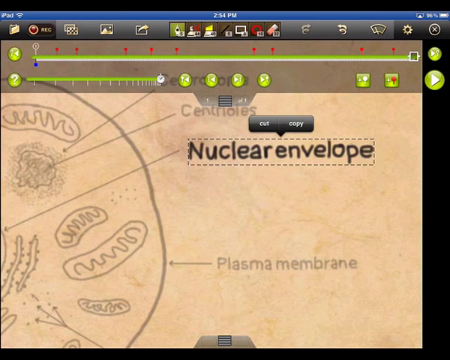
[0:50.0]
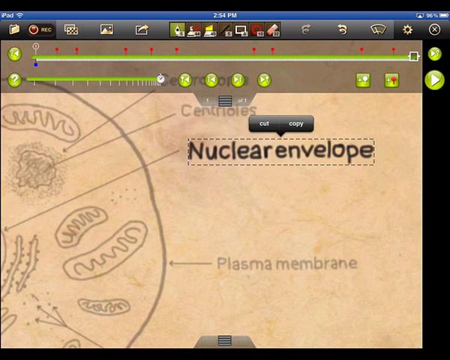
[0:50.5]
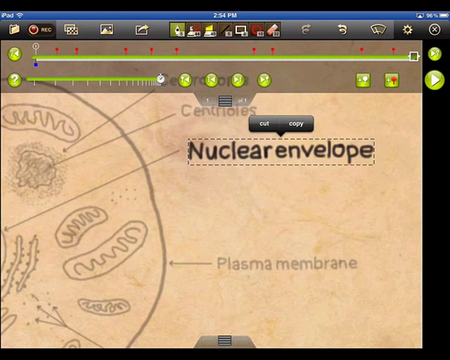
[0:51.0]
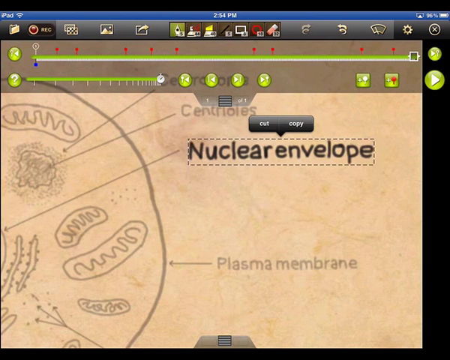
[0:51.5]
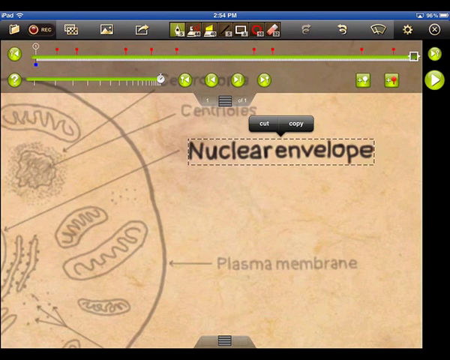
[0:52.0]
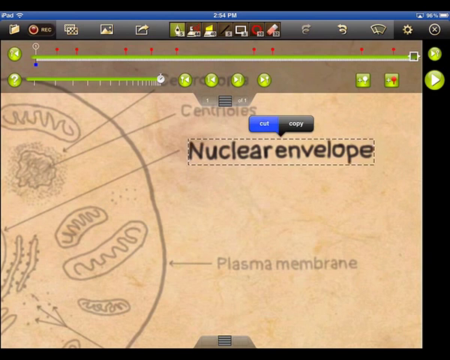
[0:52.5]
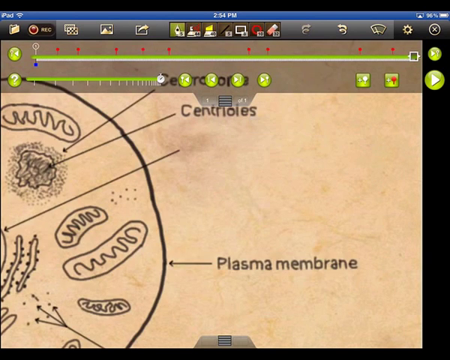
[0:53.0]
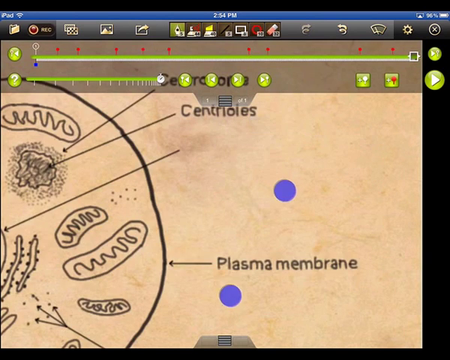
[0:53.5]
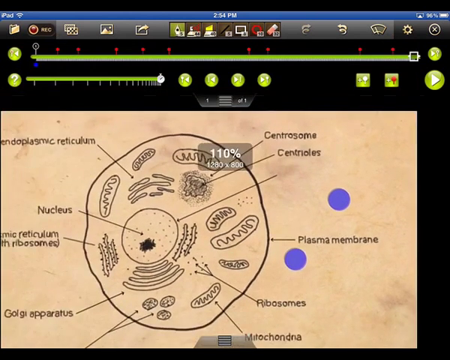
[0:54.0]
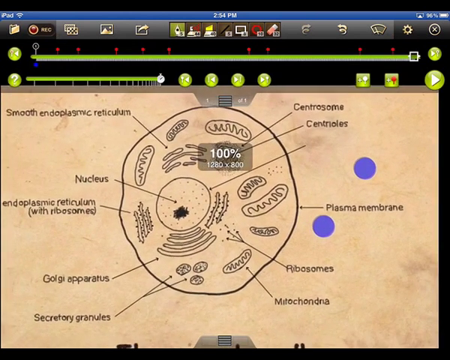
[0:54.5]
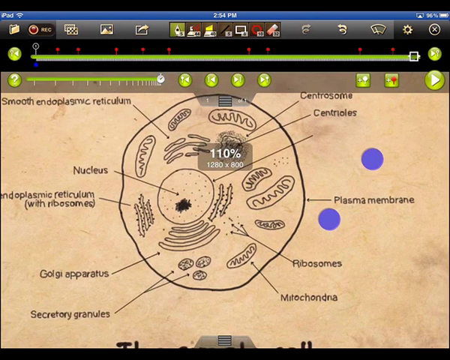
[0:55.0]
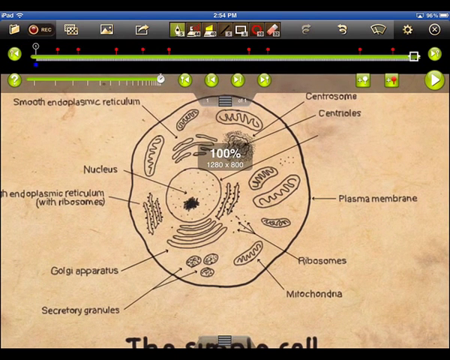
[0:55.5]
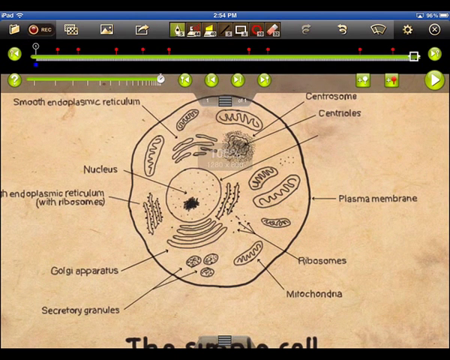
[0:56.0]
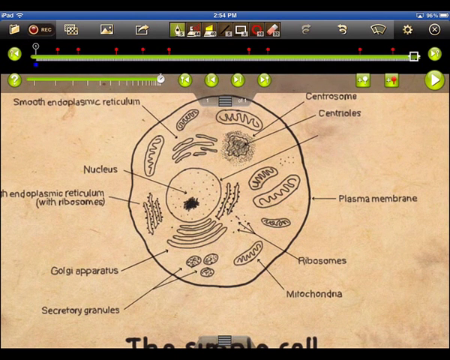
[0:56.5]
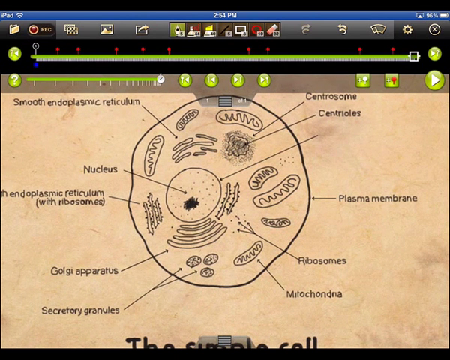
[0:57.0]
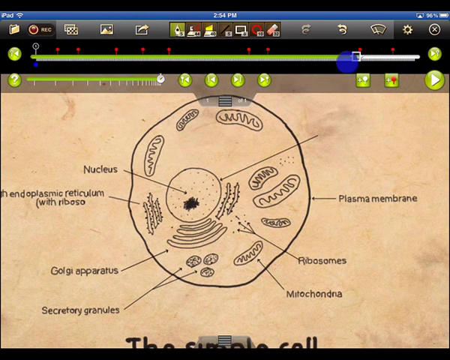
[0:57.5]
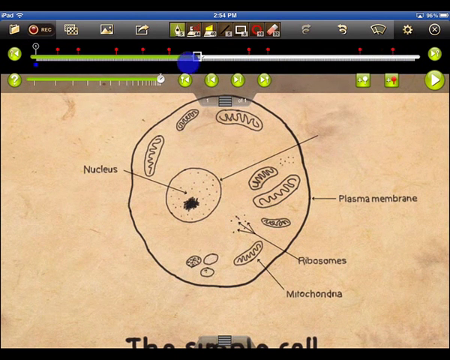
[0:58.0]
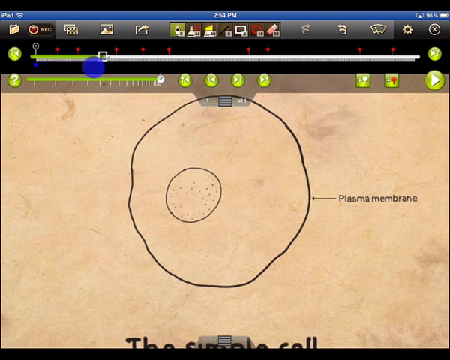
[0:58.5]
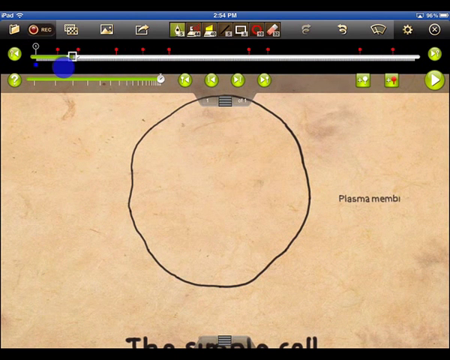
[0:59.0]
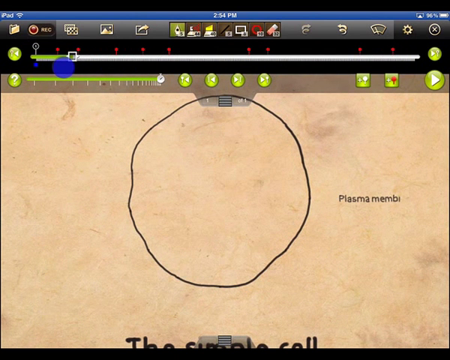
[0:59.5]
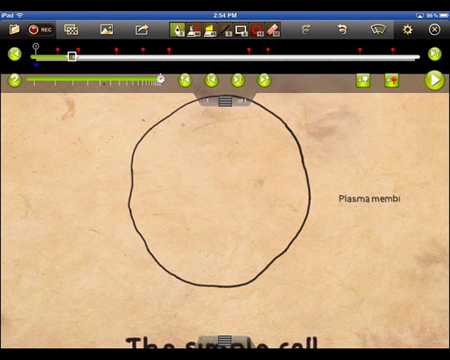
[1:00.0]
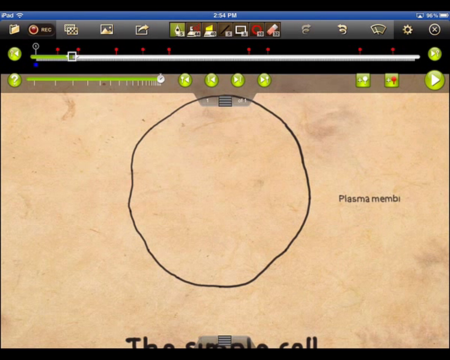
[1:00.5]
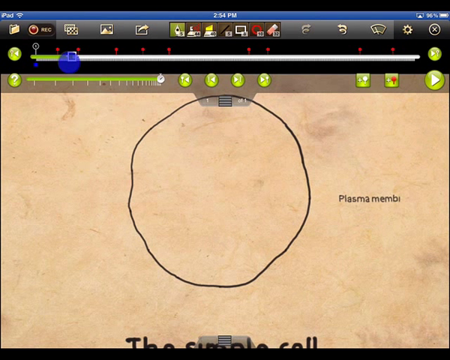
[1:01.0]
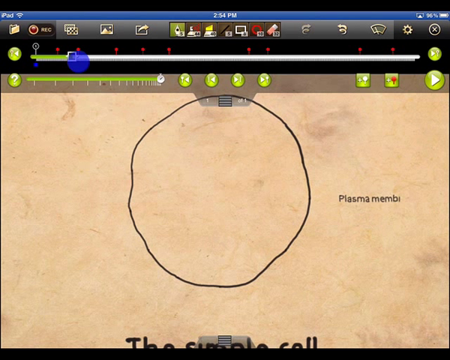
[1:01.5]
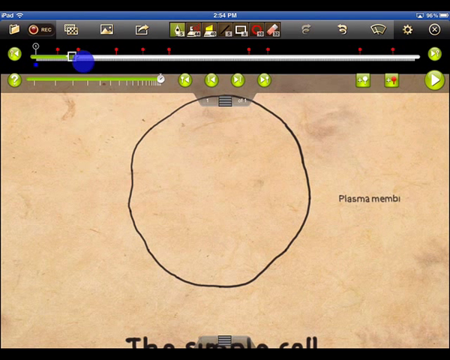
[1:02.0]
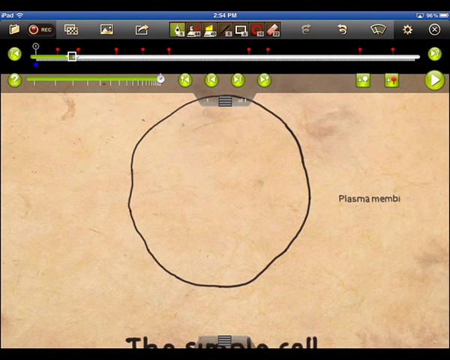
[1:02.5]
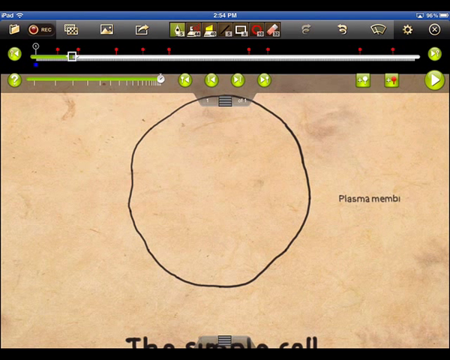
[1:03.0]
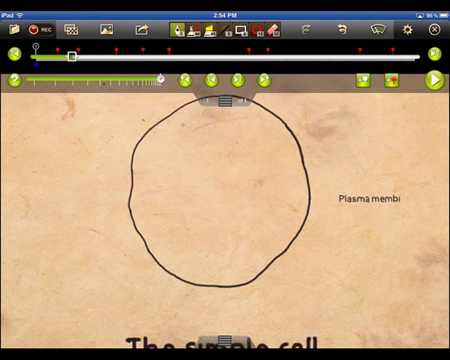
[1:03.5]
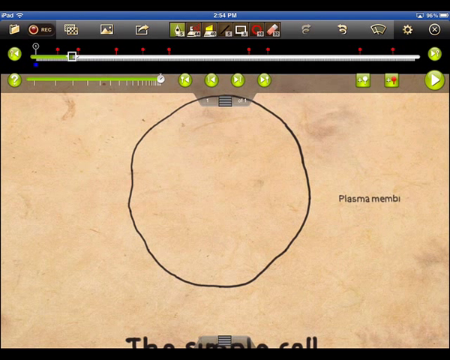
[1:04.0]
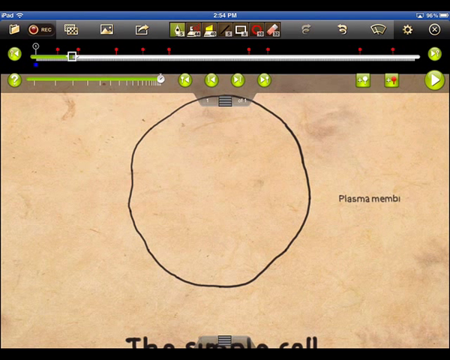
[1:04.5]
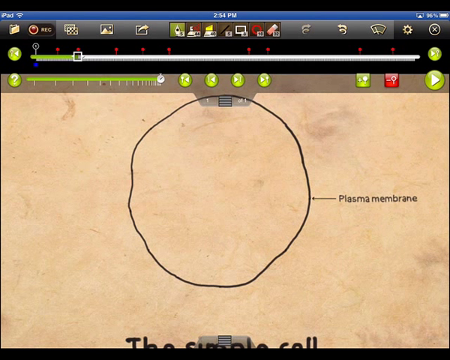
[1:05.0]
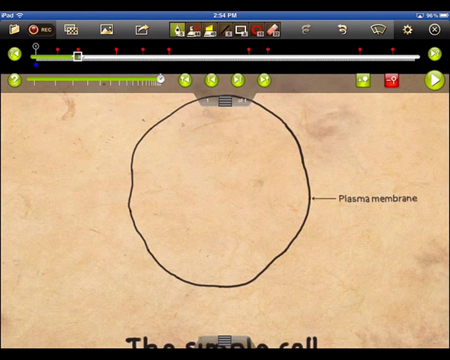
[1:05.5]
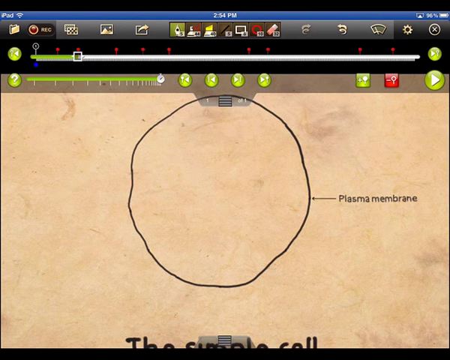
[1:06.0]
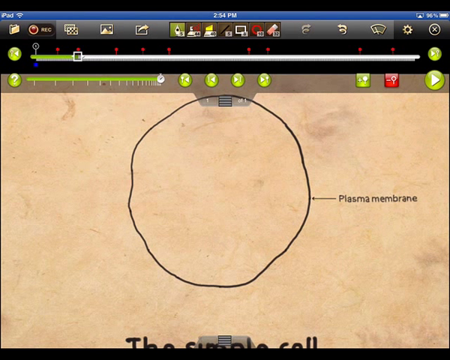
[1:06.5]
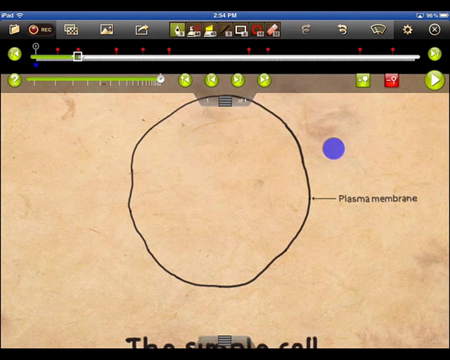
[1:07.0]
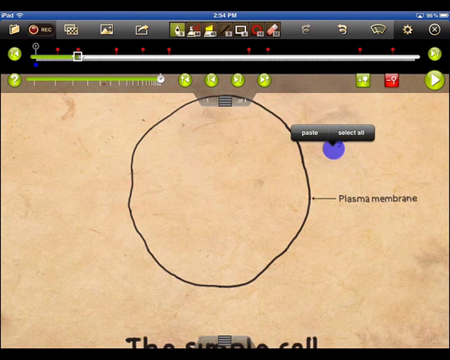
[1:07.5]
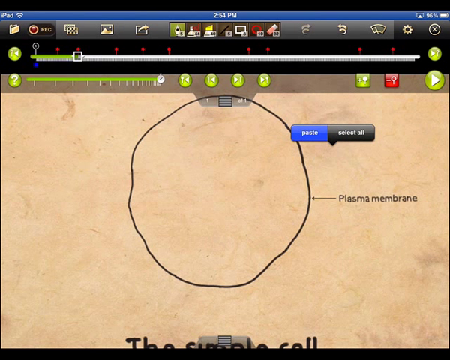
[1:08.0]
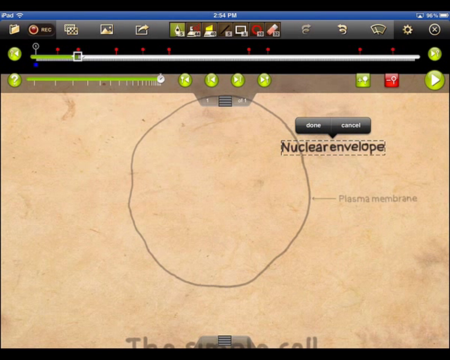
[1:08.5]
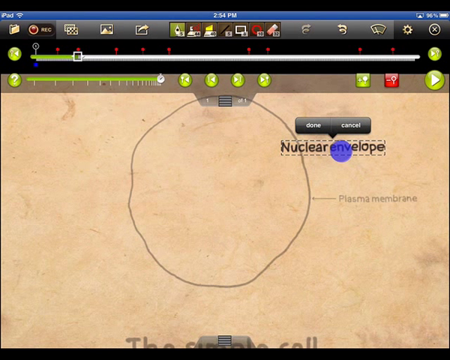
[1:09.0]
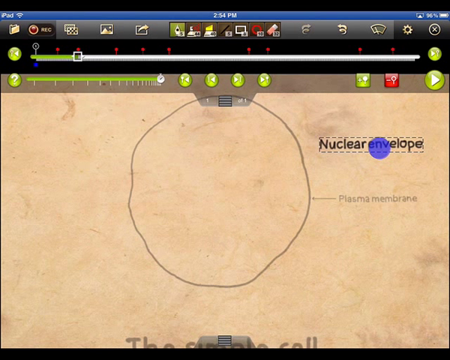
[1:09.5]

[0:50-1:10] The whole diagram of the simple cell is visible, with the tools on top. The nuclear envelope is pasted back onto the diagram, so only the plasma membrane and the pasted nuclear envelope remain. The diagram is still very clear. The blue dots are gone and the page has been zoomed in. All the cells around the diagram are visible. The page can be held and moved anywhere with the lasso tool, and when the page is zoomed, the other labelled cells on the diagram can be seen. The focus stays on the nuclear envelope, which is shown as the video ends.